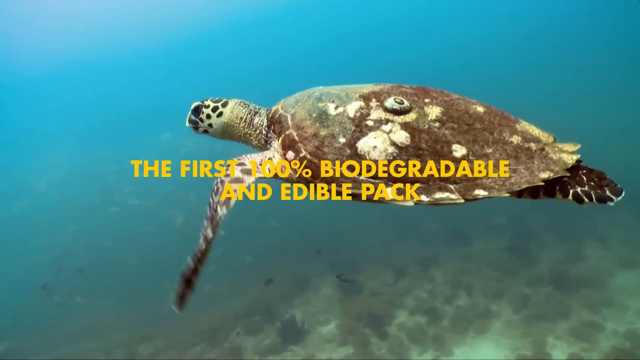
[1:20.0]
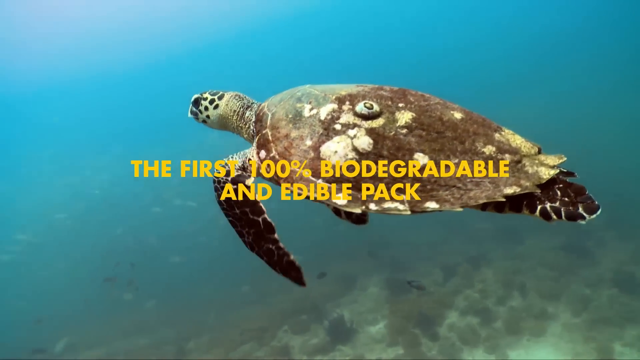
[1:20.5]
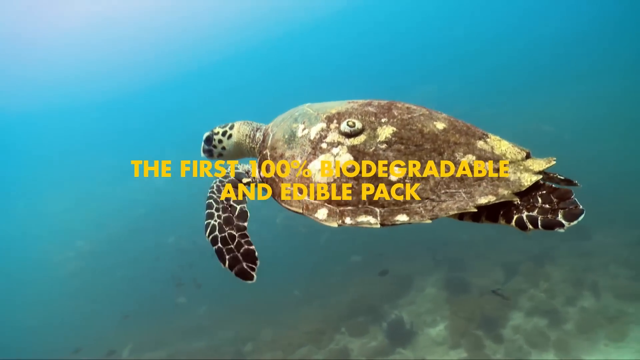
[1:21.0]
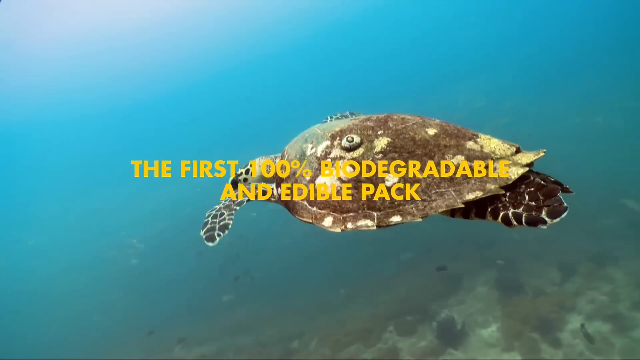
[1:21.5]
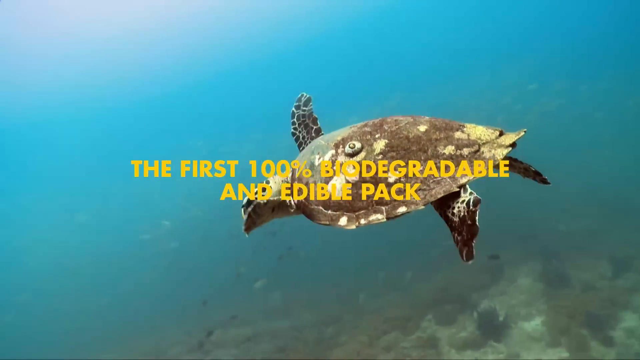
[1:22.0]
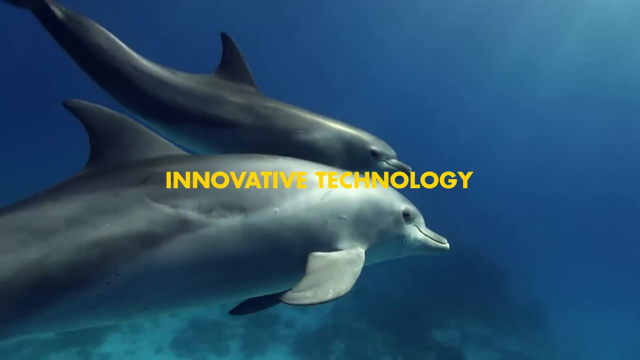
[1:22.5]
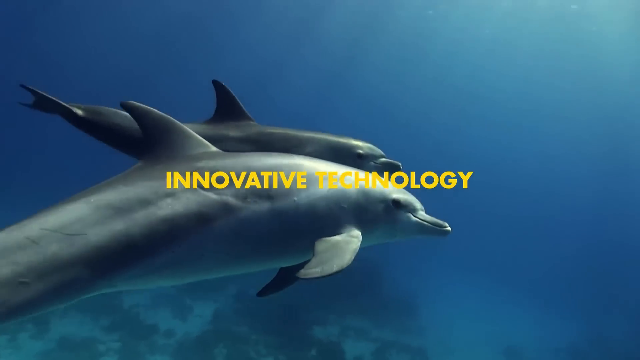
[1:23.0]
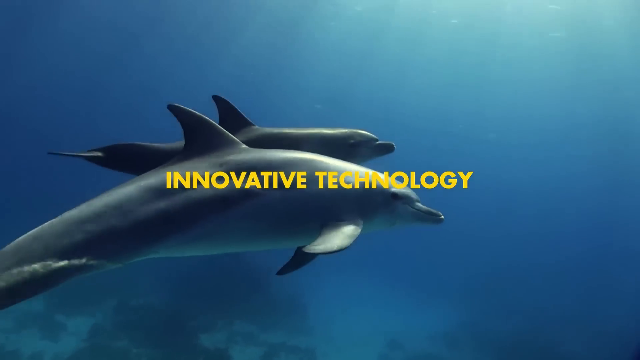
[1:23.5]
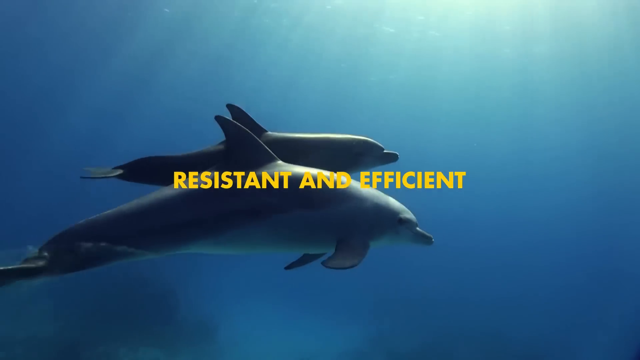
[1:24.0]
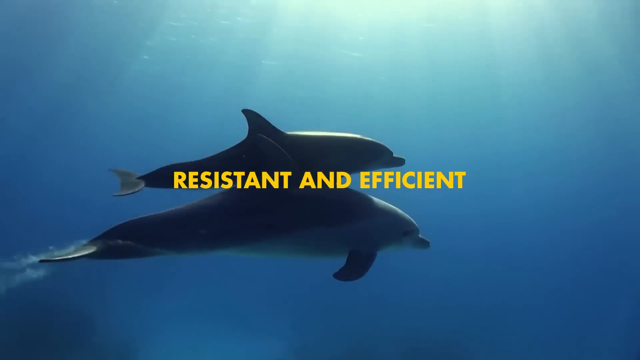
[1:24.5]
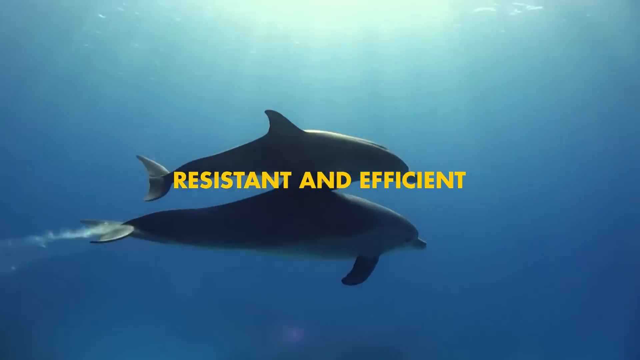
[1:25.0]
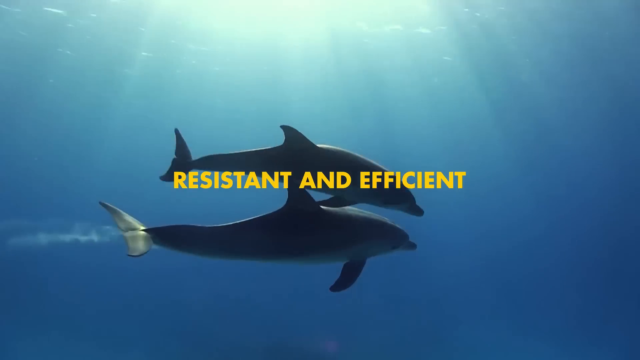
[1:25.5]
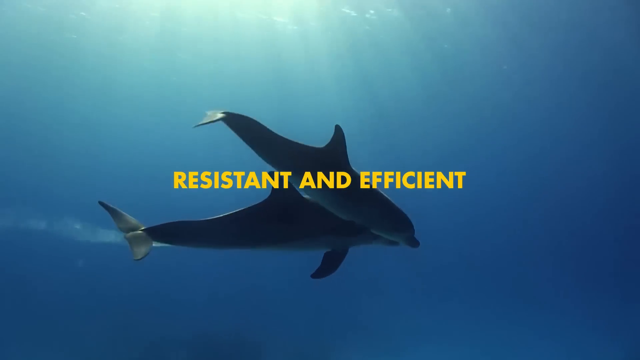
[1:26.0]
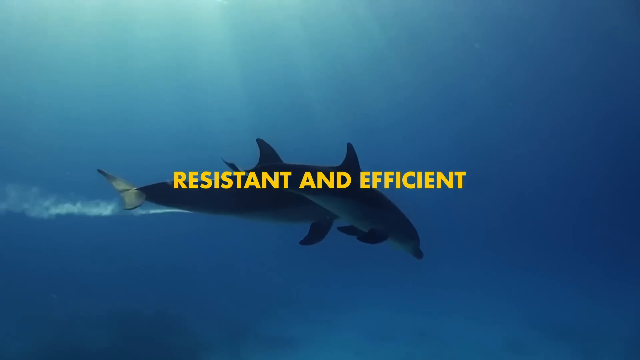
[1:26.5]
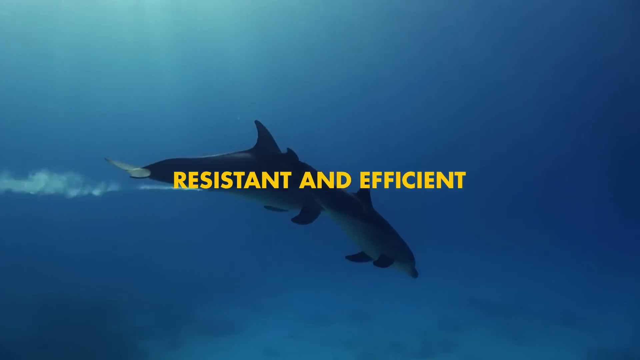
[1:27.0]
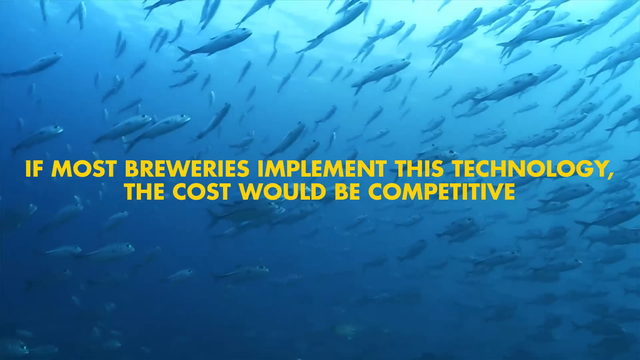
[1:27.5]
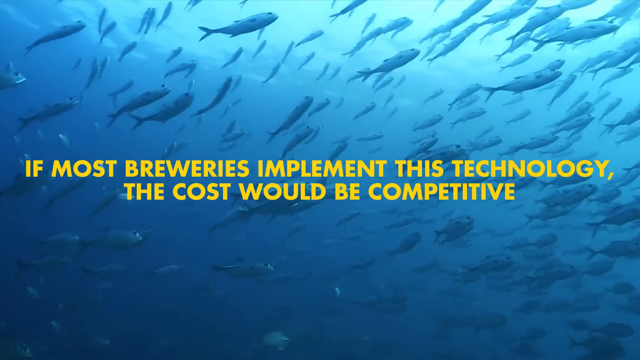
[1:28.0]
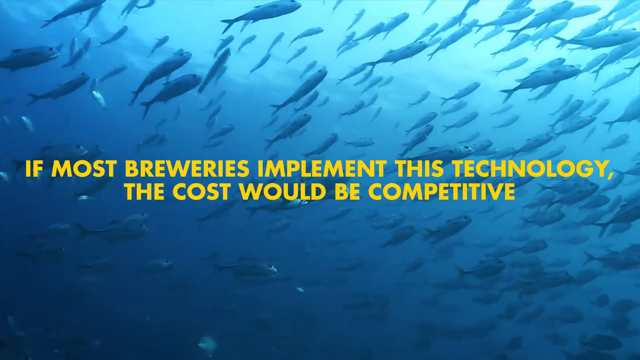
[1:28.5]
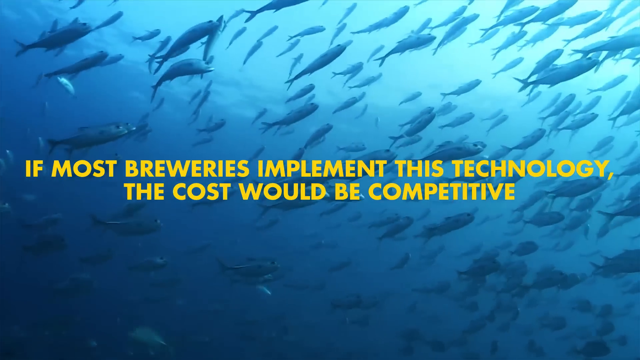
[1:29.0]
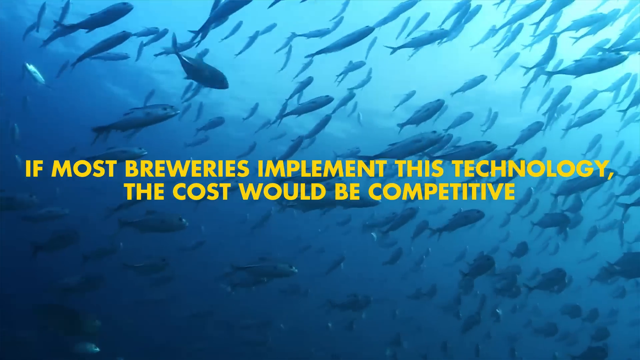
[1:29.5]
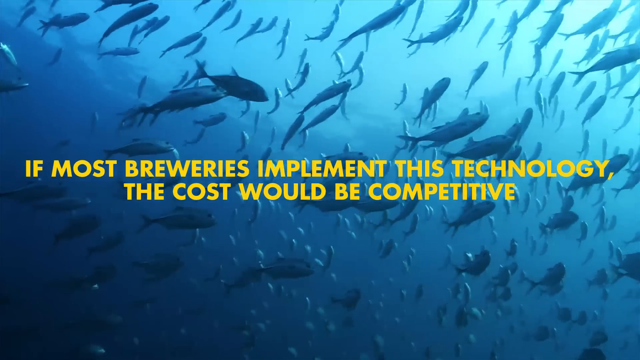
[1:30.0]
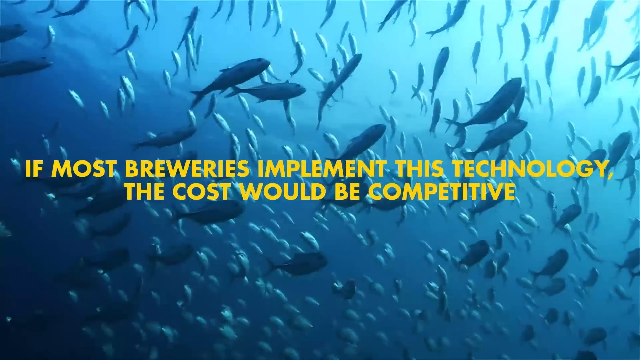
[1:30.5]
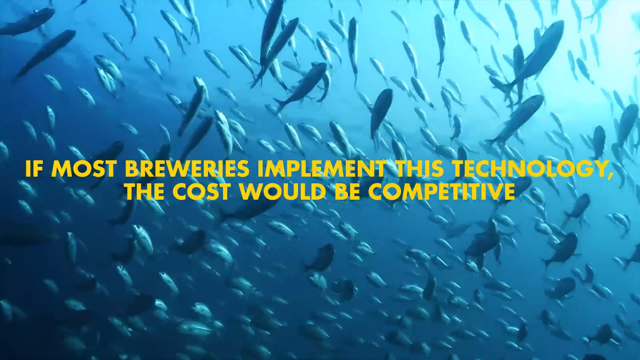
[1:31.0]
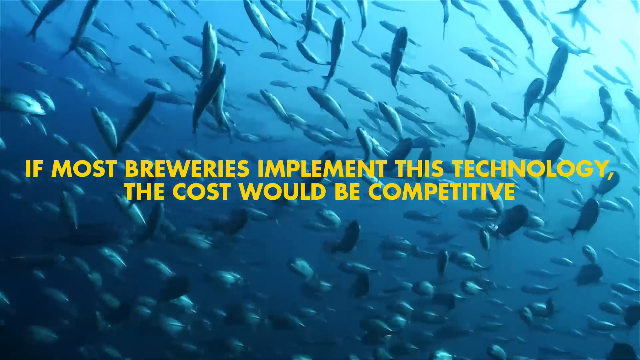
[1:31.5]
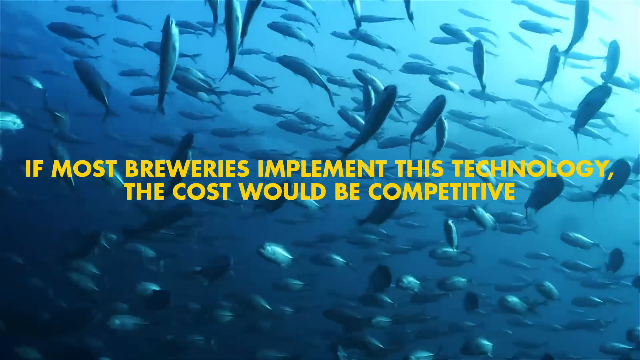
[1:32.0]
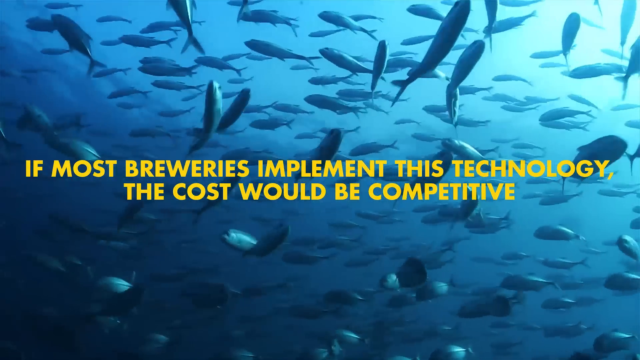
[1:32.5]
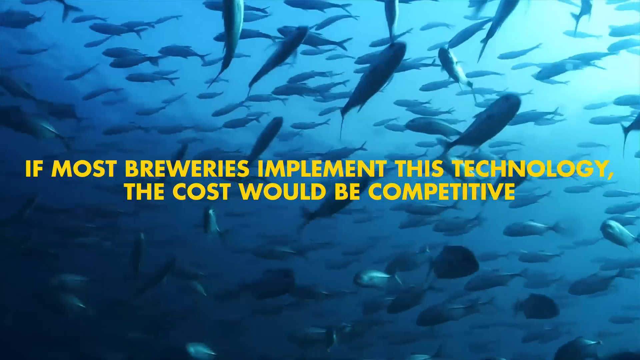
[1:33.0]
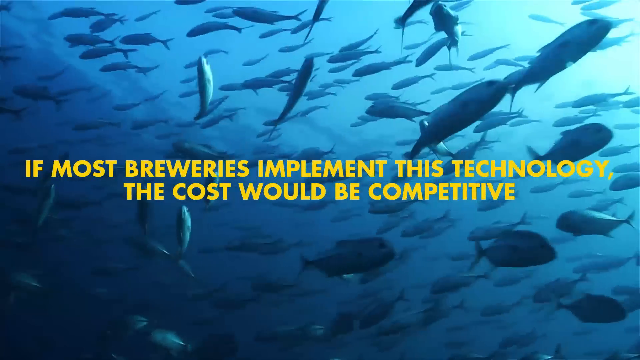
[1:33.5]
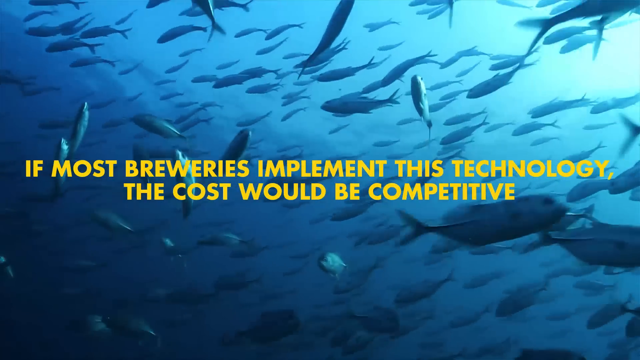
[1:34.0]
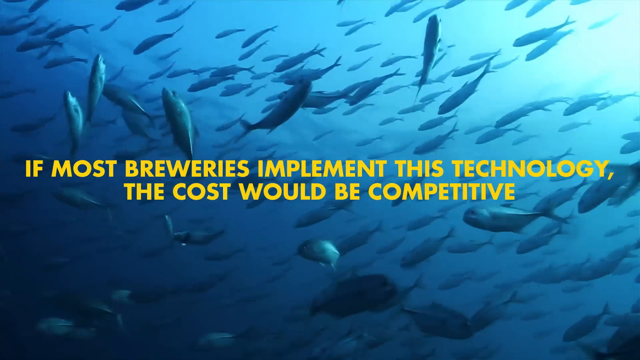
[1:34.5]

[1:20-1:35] Another turtle swims, dolphins swim, and fish swim as the video cuts from one ocean scene to another. Text over the footage describes this as innovative technology that is resistant and efficient, and states that if most breweries implement this technology, the cost would be competitive.